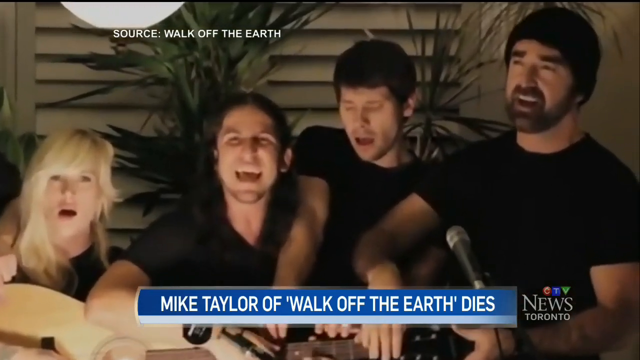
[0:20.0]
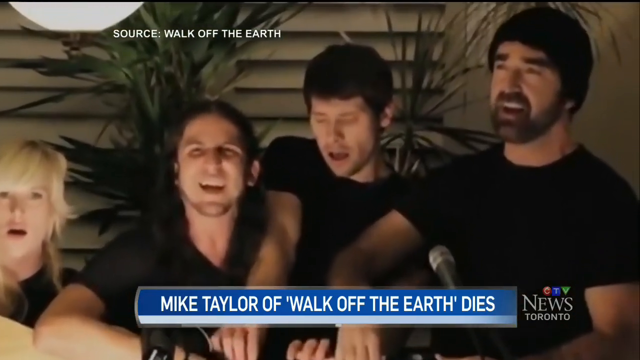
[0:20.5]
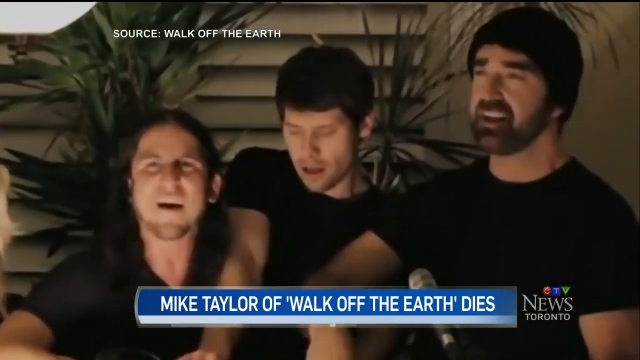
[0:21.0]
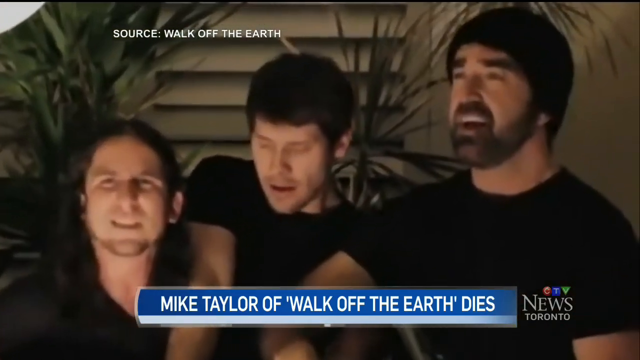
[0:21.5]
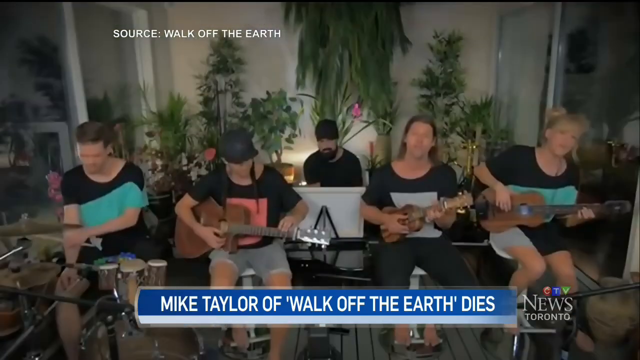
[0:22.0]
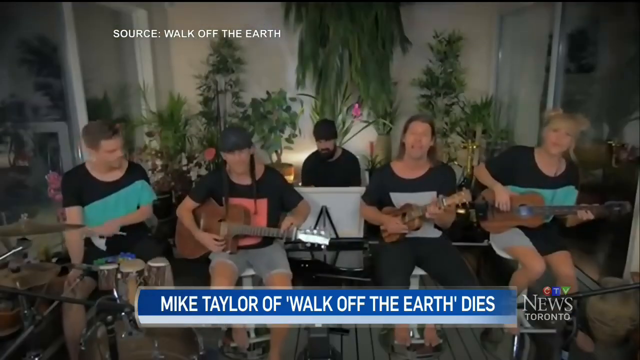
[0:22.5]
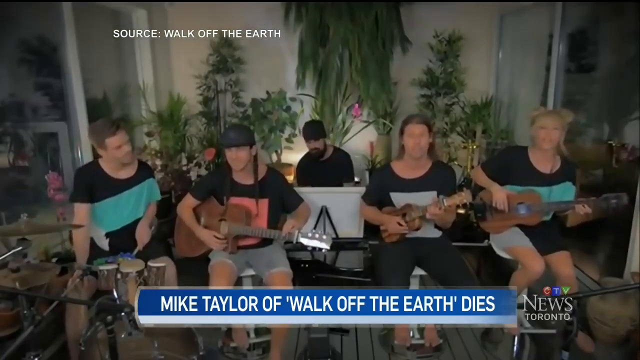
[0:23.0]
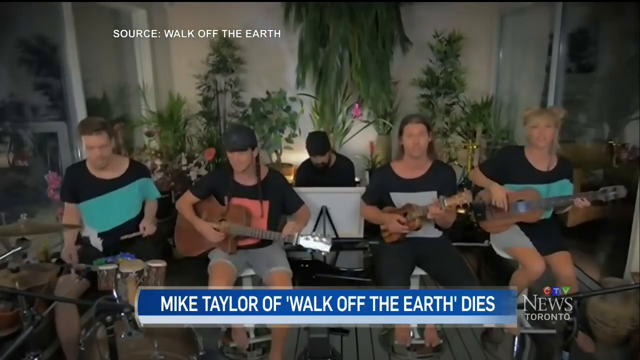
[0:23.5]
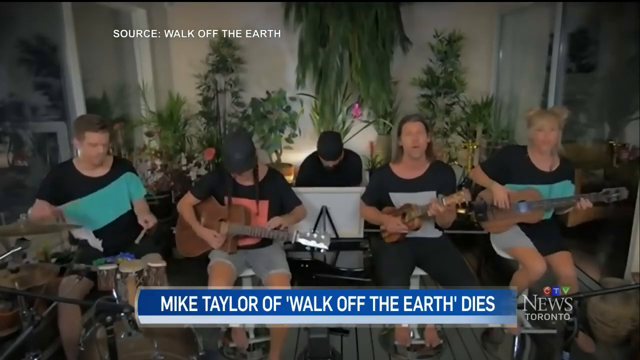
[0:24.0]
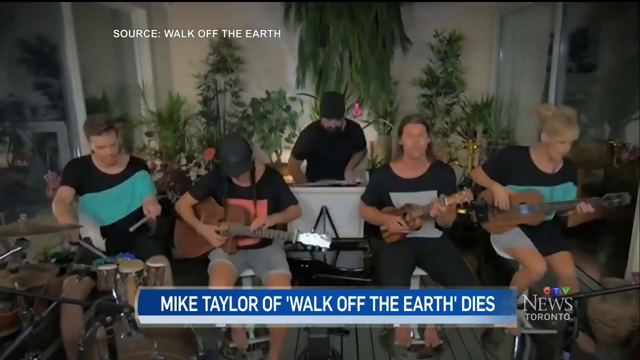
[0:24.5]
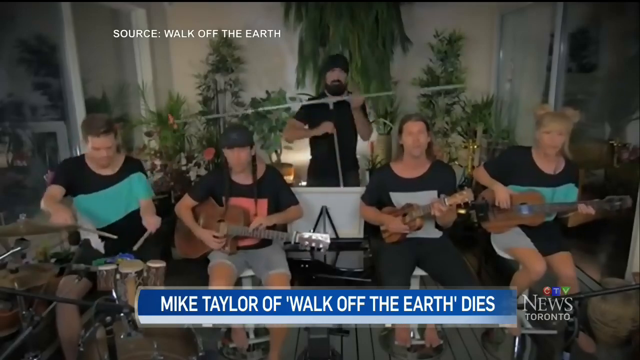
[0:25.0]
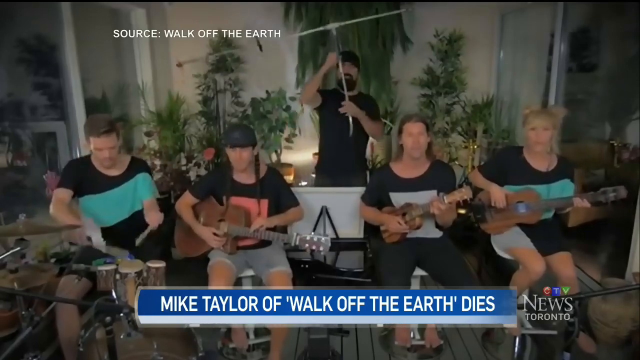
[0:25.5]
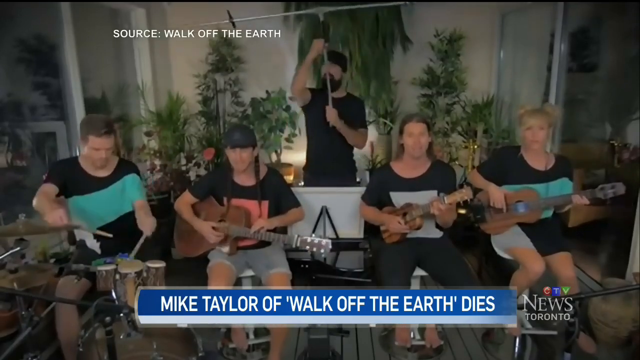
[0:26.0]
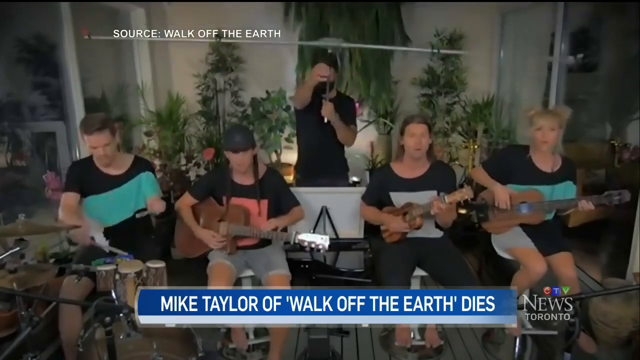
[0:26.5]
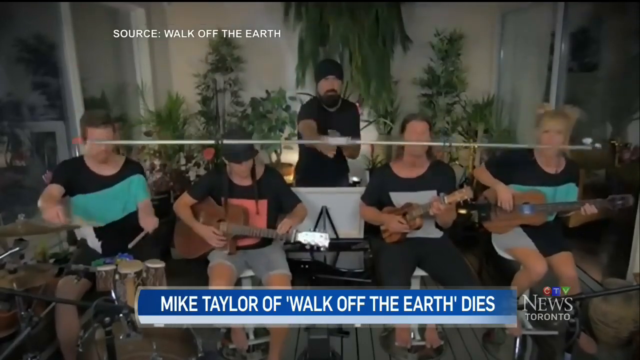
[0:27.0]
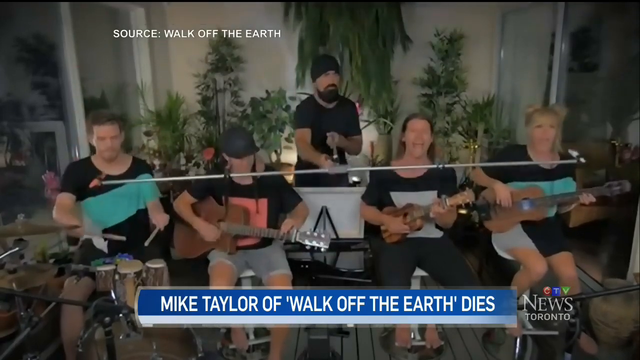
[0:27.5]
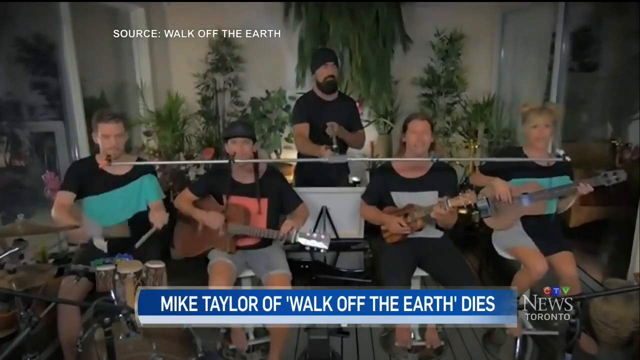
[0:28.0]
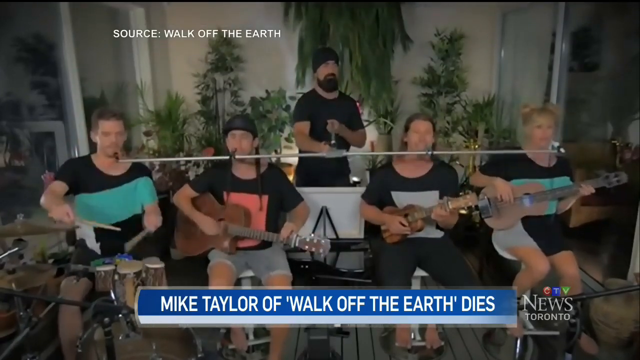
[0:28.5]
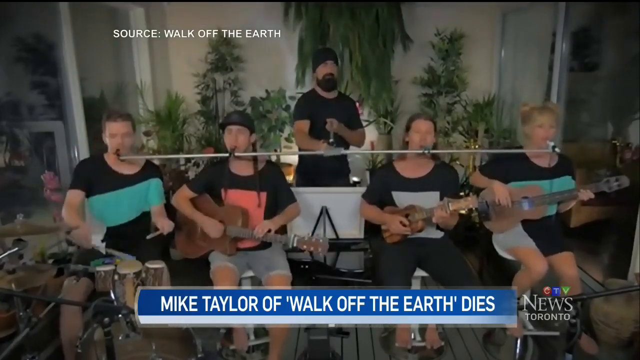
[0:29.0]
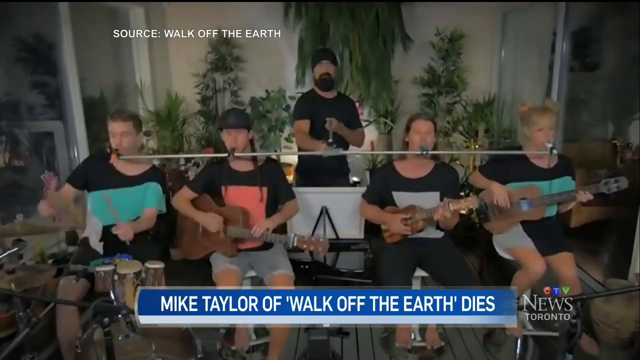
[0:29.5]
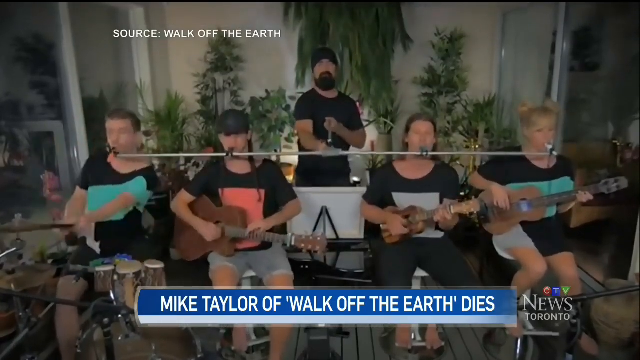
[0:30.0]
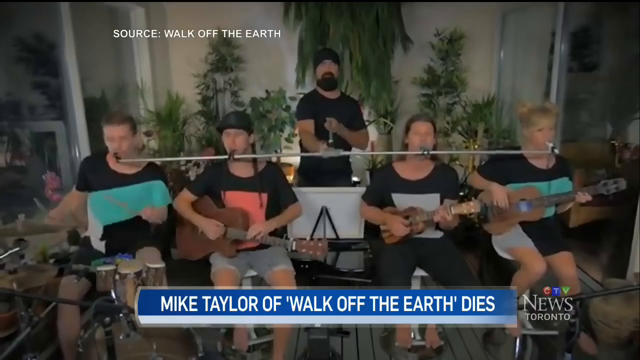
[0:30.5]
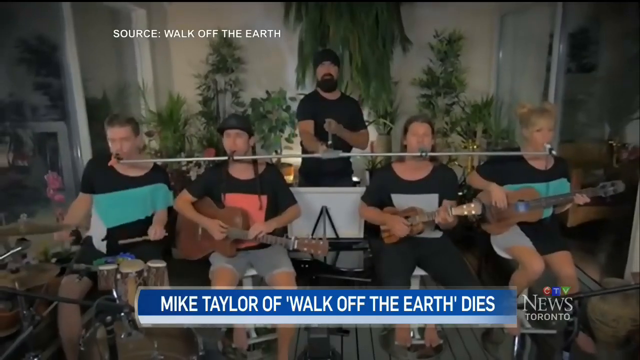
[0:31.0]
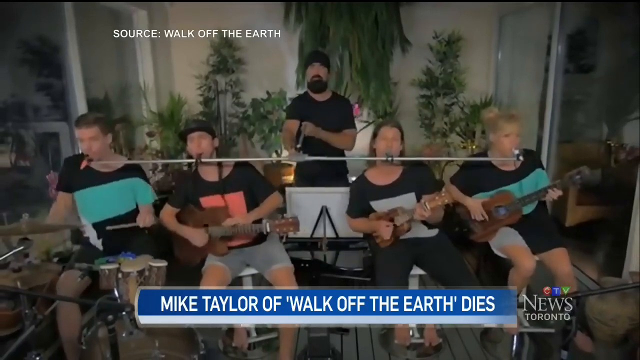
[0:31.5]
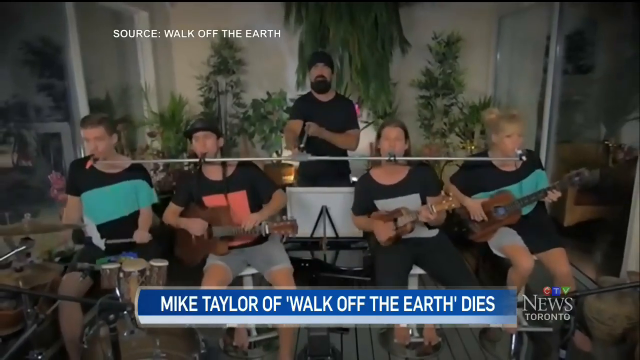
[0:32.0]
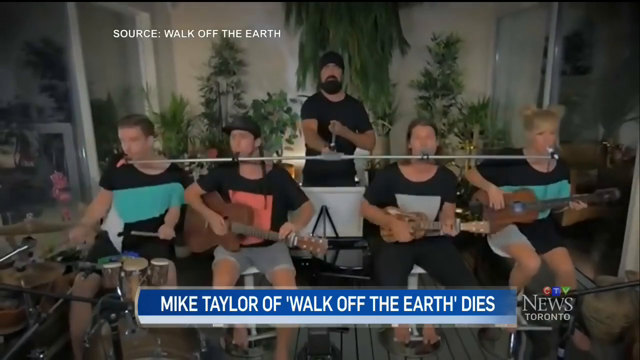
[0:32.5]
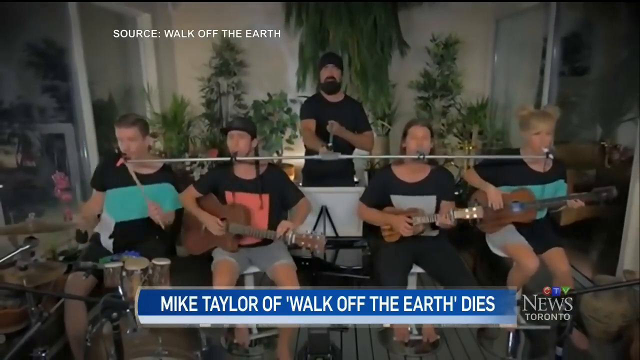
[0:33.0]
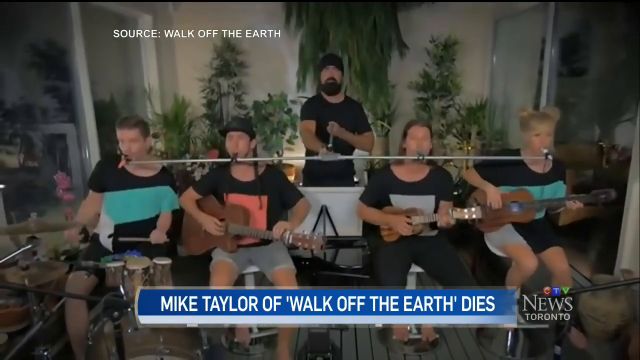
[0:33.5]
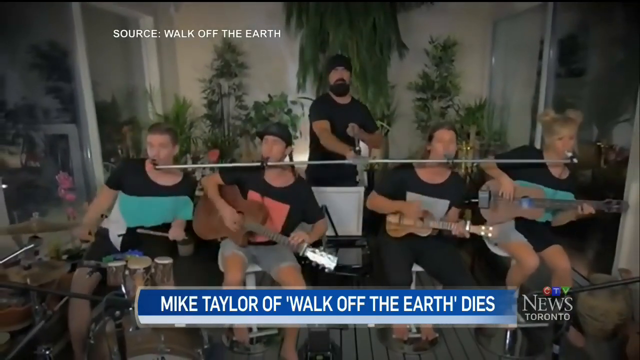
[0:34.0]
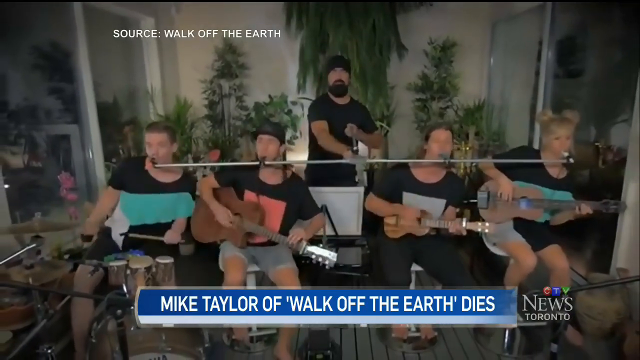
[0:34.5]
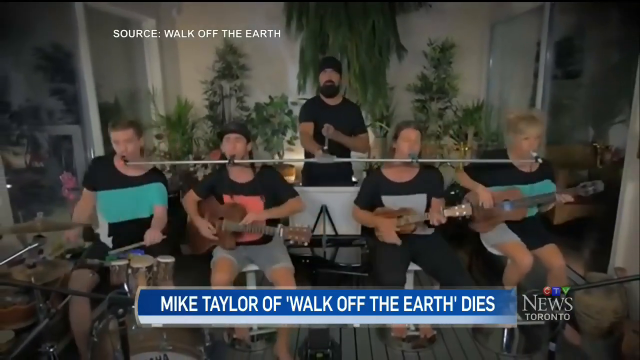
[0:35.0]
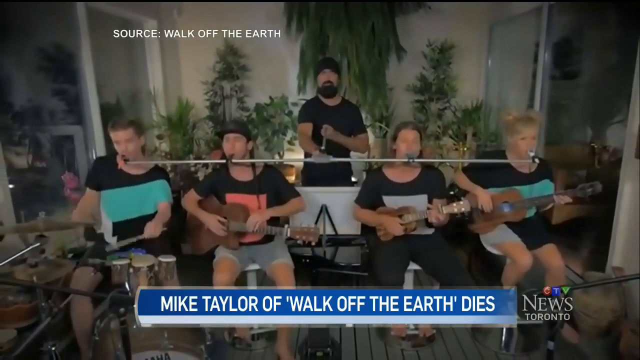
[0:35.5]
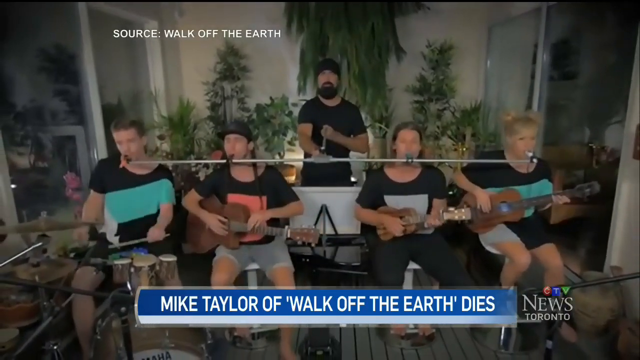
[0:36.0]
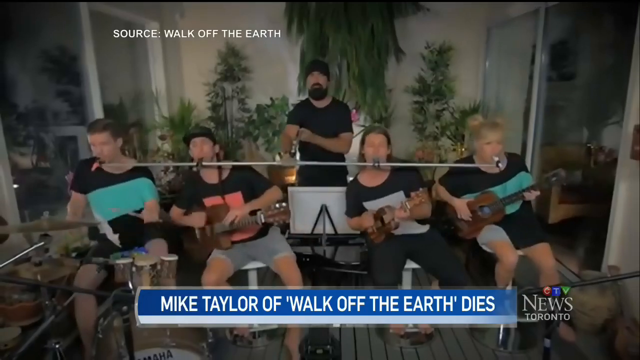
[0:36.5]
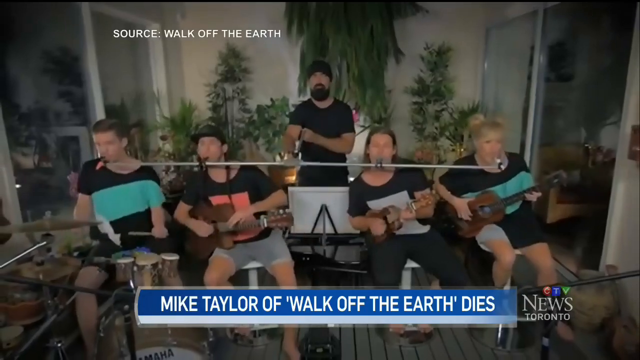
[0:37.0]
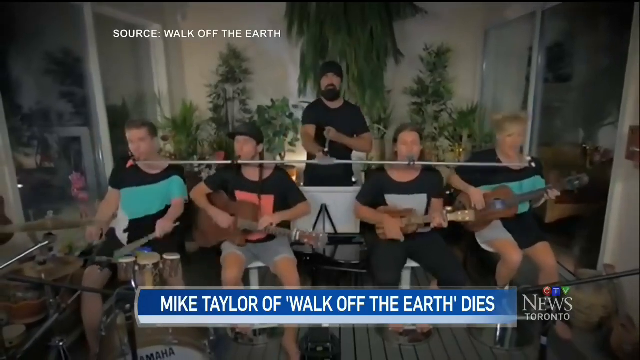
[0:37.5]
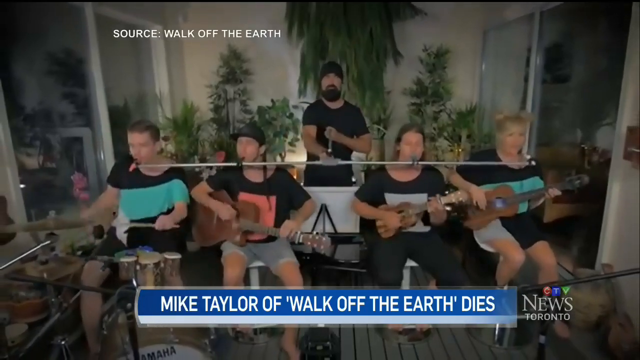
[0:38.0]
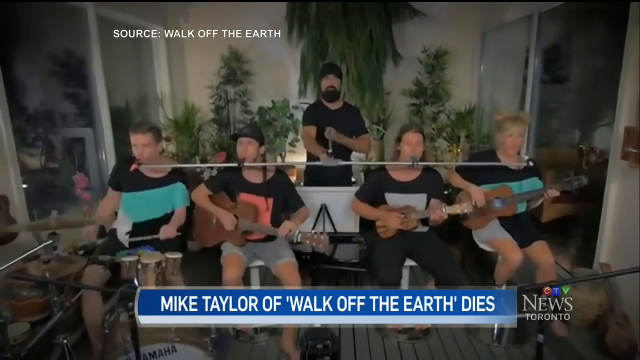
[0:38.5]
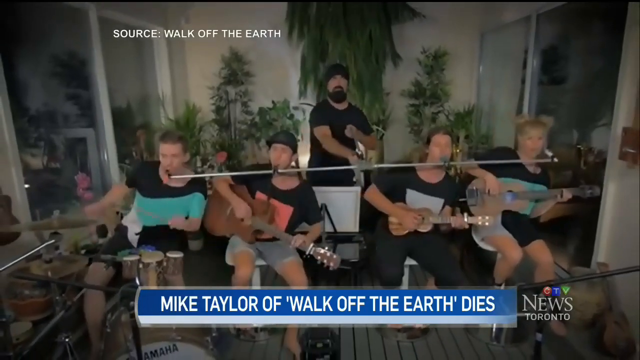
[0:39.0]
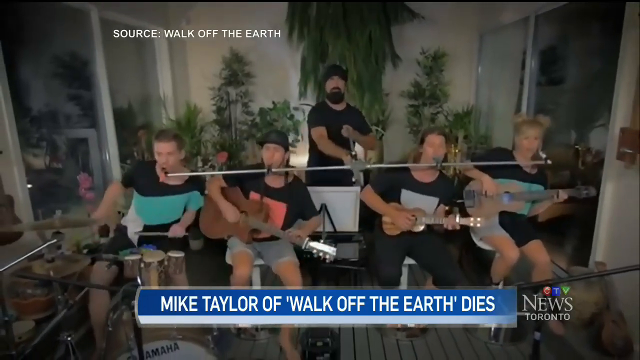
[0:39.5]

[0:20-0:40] The white caption "MIKE TAYLOR OF 'WALK OFF THE EARTH' DIES" remains at the bottom of the screen as the video shows a group of five individuals seated on individual chairs, four males on the left and a blonde-haired female on the right. They play various instruments. The person on the far left plays a small drum set and wears a black crewneck t-shirt with a diagonal light green stripe. The second from the left plays a small guitar and wears a black crewneck t-shirt with an orange design in the center. The blonde-haired female on the far right plays a small acoustic guitar, and a male second from the right, toward the center of the screen, plays a ukulele. A bearded male standing in the center at the back of the row holds a horizontal bar carrying four small mouth instruments, which appear to be kazoos. He has lifted the bar and positions it in front of the mouths of the four musicians seated in the front row, who lean left and right in unison while blowing into the kazoo-type devices at the same time. A small logo at the bottom right of the screen shows the emblem "CTV News Toronto".